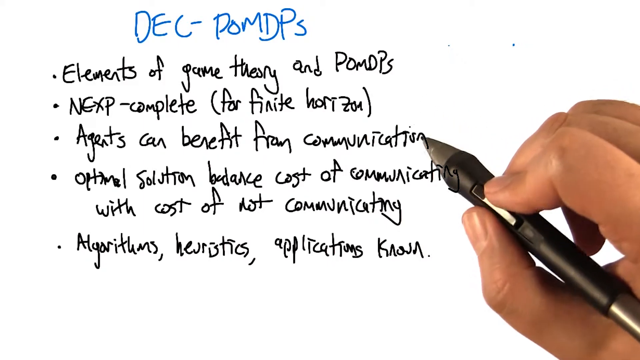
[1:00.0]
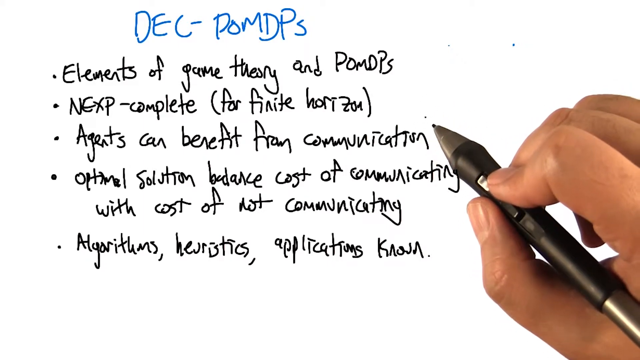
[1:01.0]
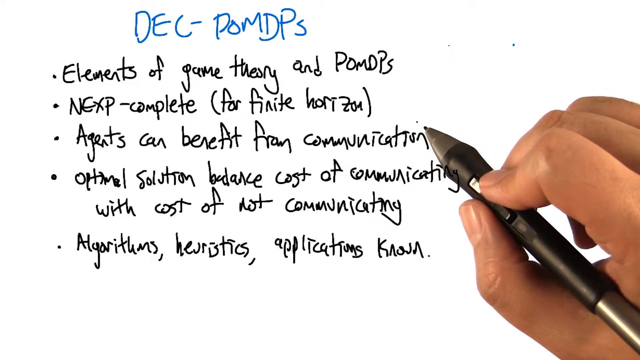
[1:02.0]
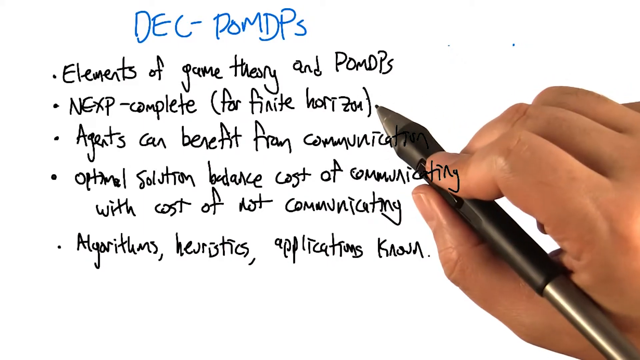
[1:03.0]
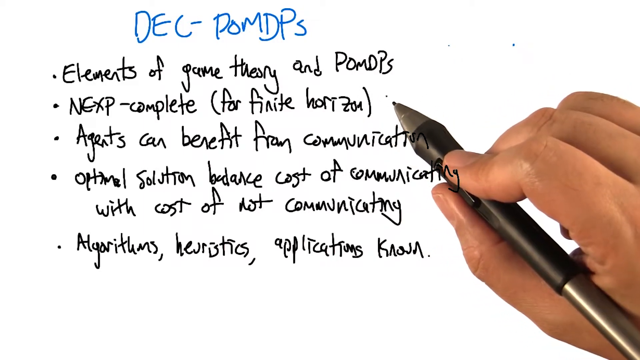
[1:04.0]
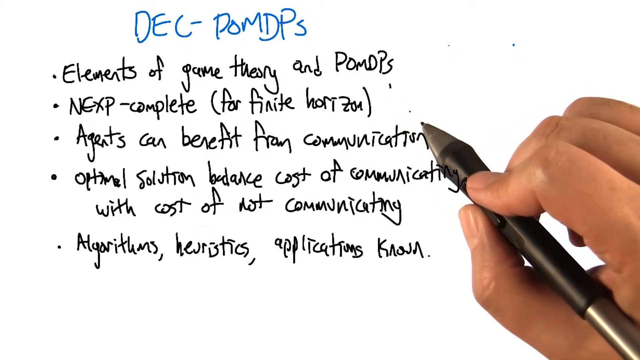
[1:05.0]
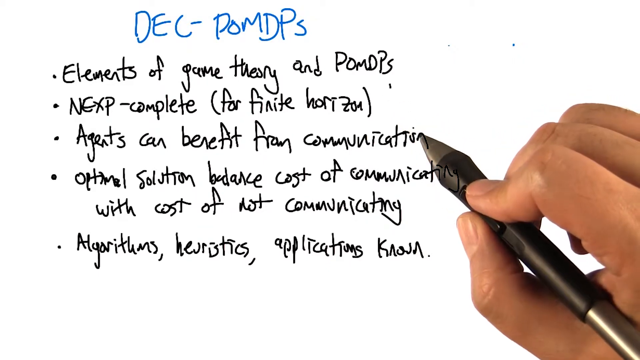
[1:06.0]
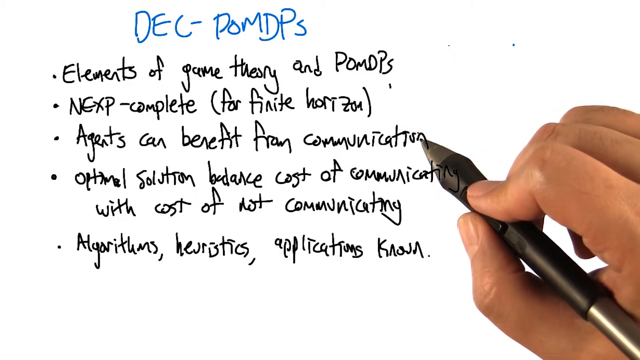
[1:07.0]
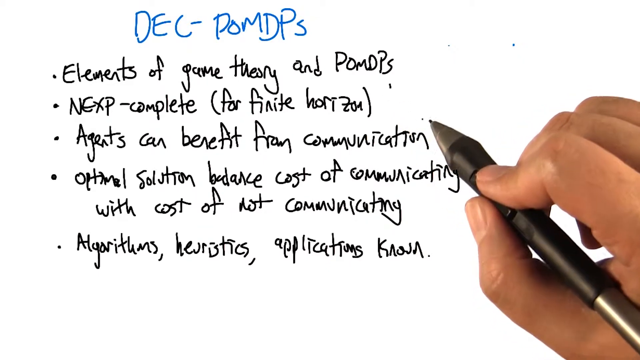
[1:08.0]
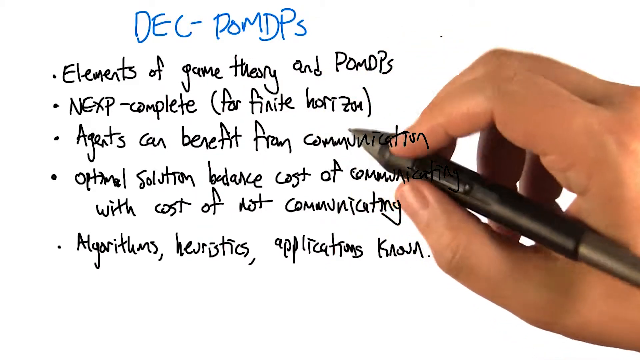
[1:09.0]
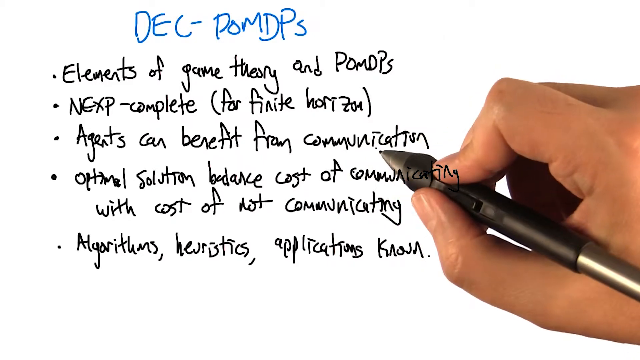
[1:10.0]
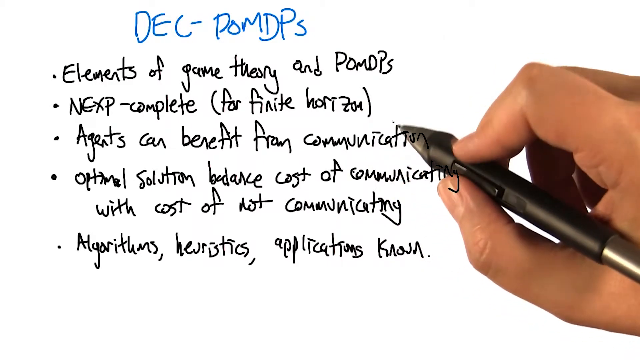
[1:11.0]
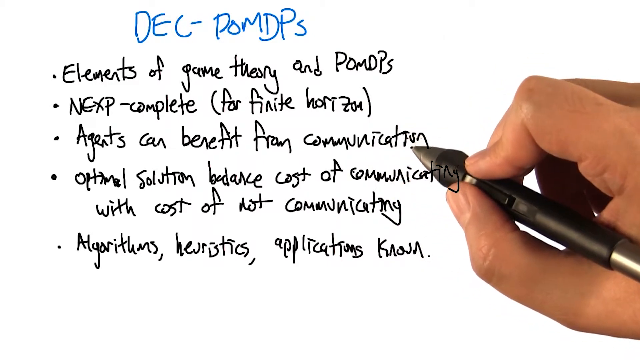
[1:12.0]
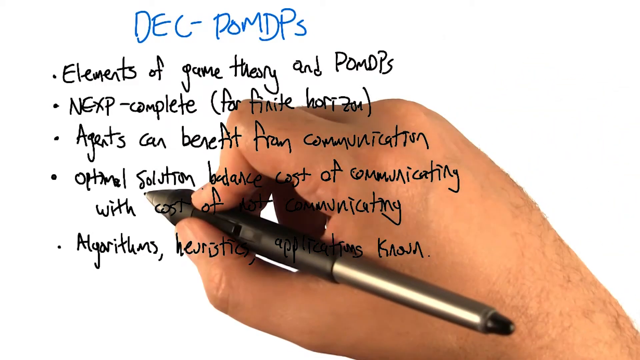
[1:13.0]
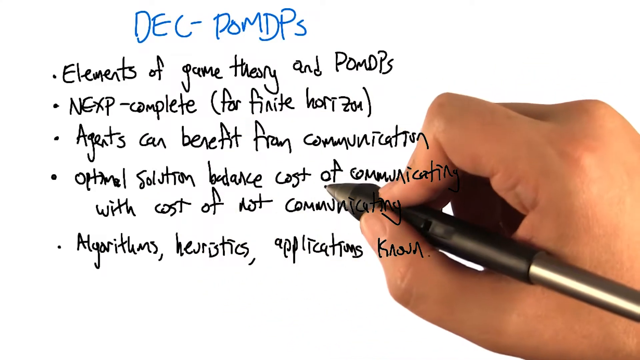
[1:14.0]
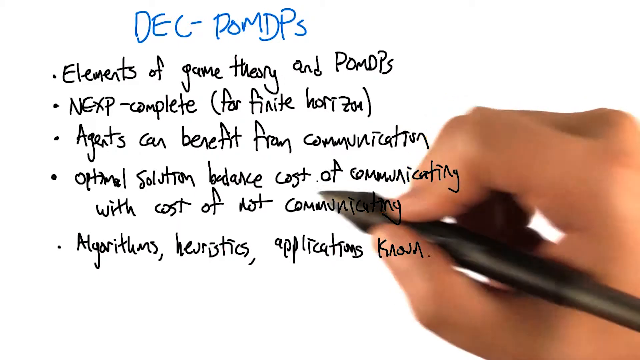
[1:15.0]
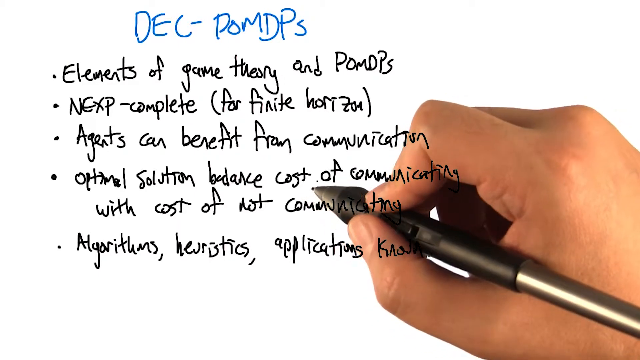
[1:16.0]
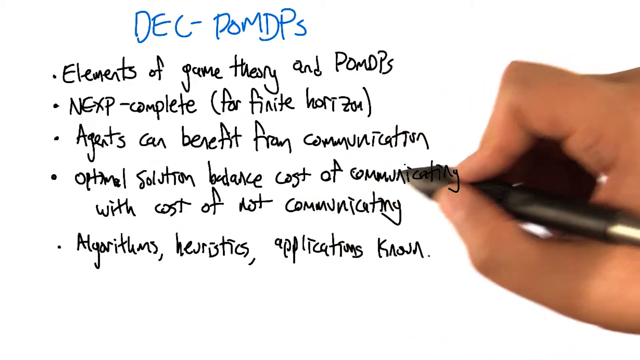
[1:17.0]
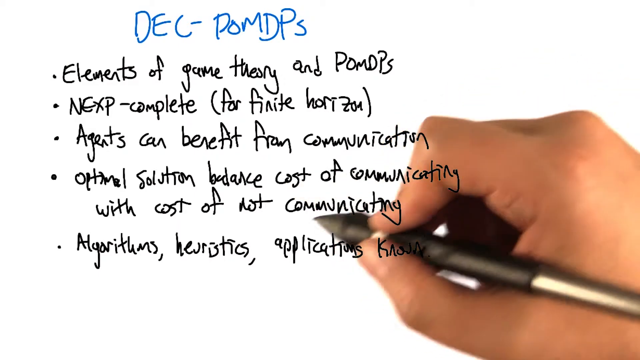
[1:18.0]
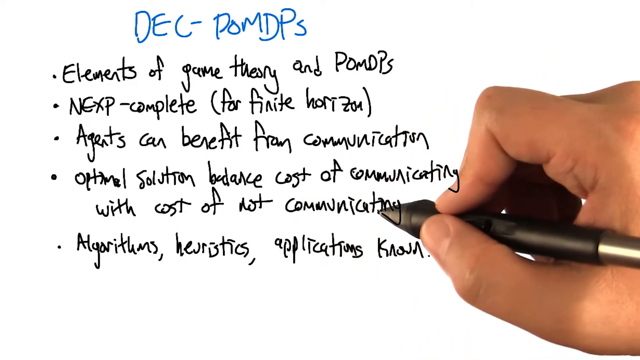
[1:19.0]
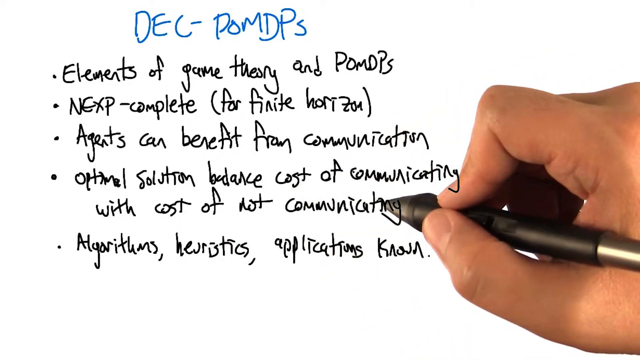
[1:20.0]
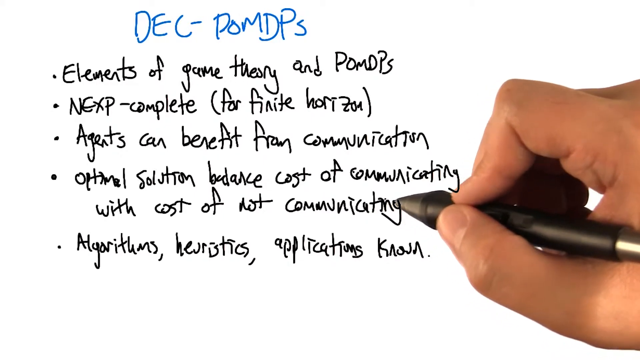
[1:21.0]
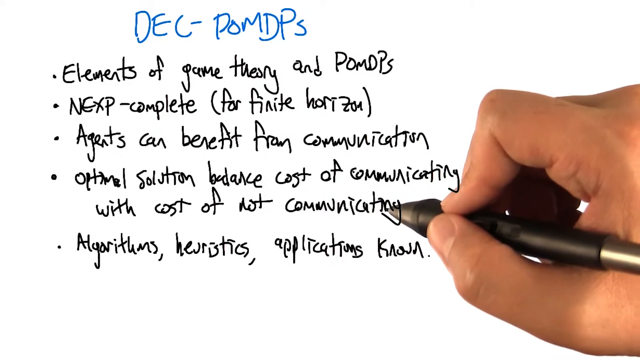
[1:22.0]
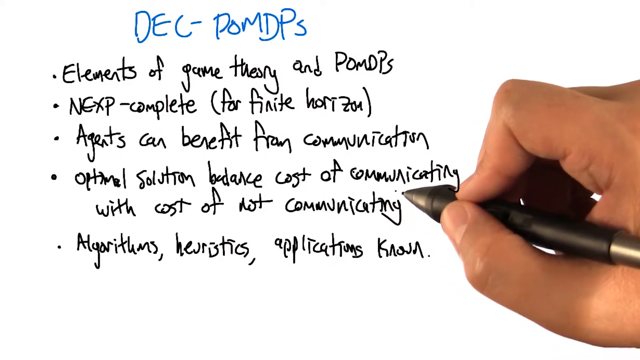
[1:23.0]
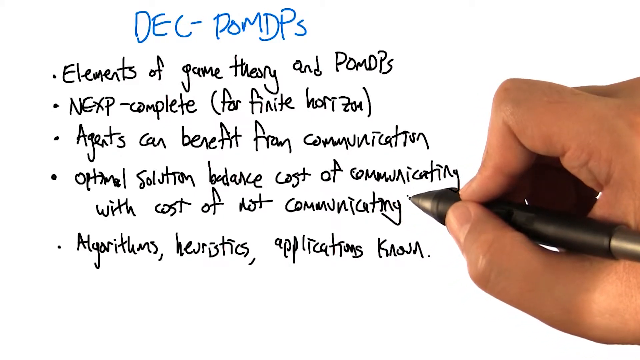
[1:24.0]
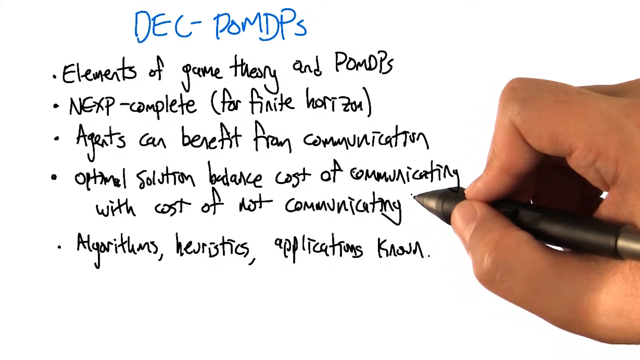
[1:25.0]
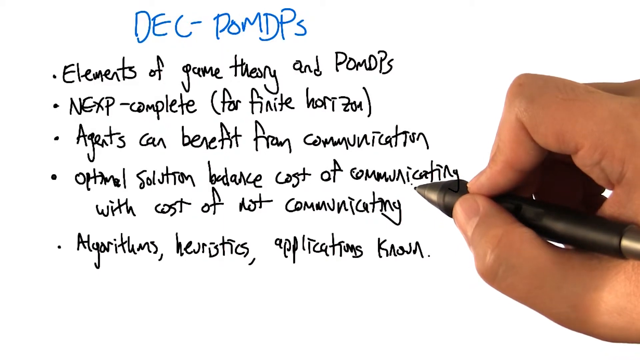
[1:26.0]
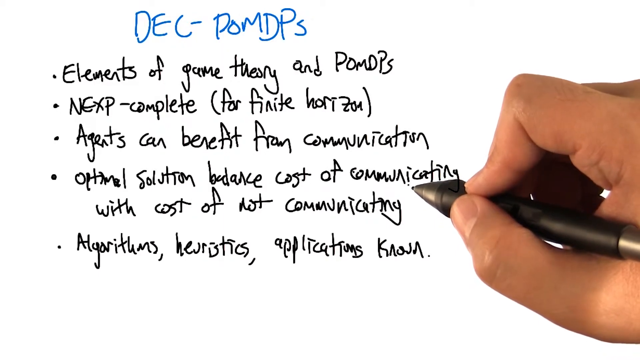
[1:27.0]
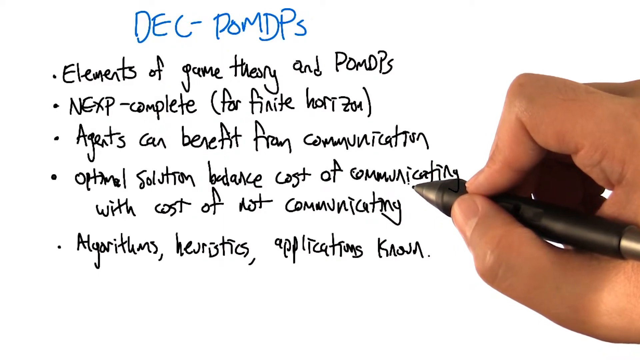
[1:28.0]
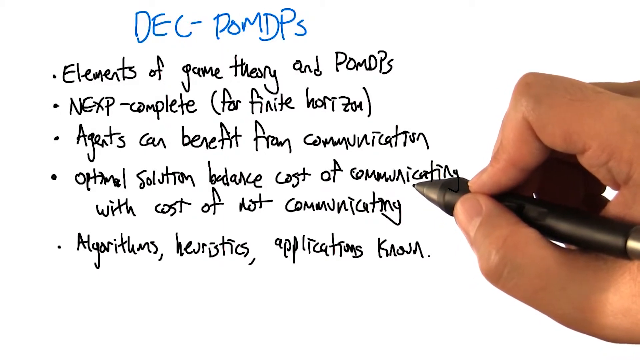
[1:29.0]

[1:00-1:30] The same screen shows the same handwritten information. The person moves to the line "optimal solution balance cost of communicating with cost of not communicating" and seems to link the two parts of it. He seems to write something, but whatever he writes does not appear. The view looks like a projection of the paper, possibly viewed under a microscope or scanned and projected, because the hand and pen appear under the words as he highlights or writes on the paper.